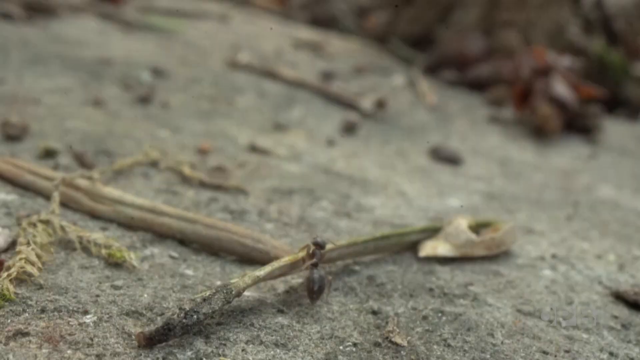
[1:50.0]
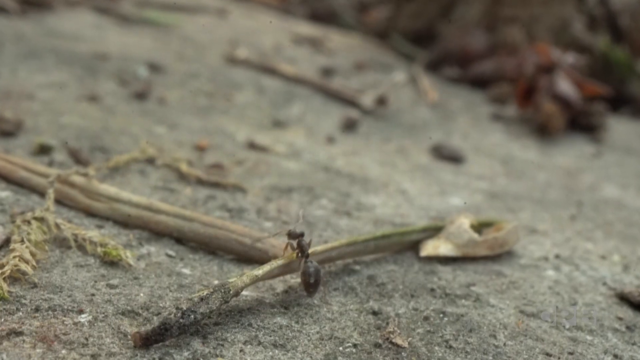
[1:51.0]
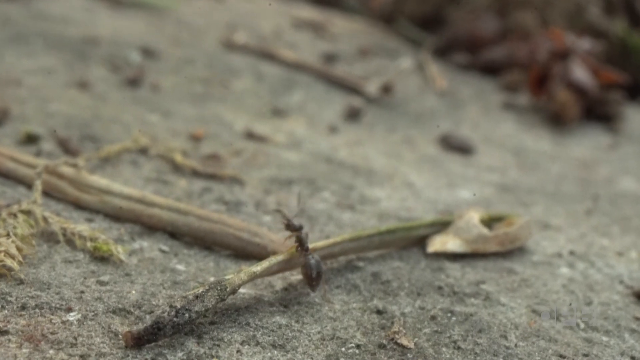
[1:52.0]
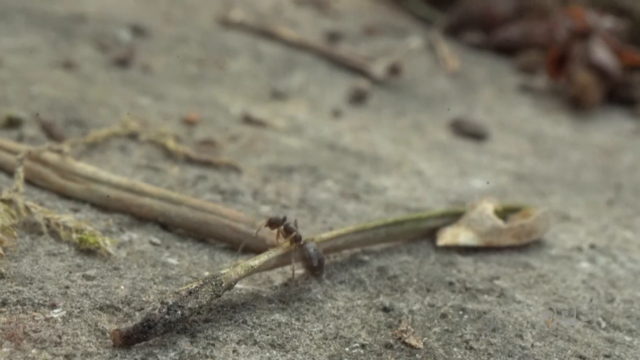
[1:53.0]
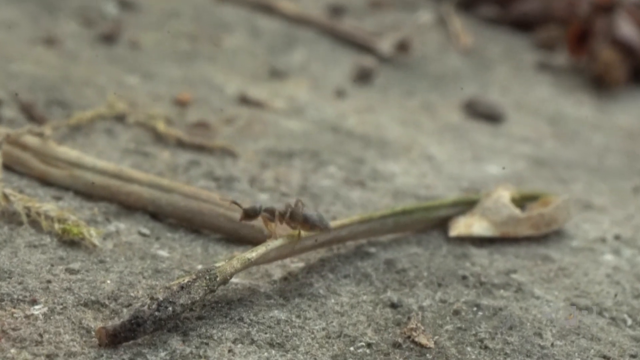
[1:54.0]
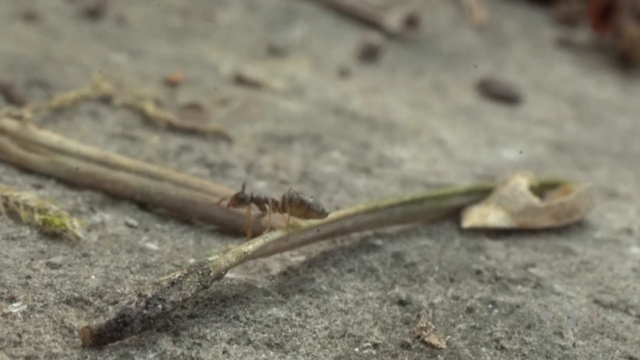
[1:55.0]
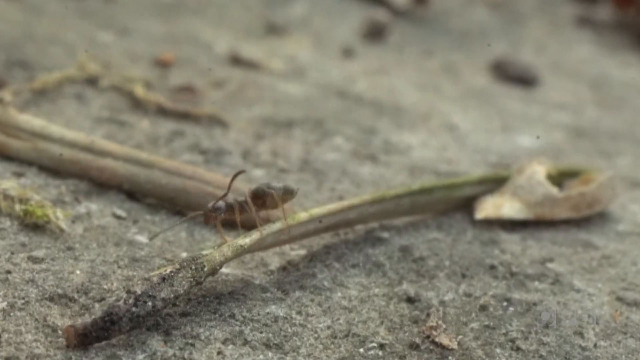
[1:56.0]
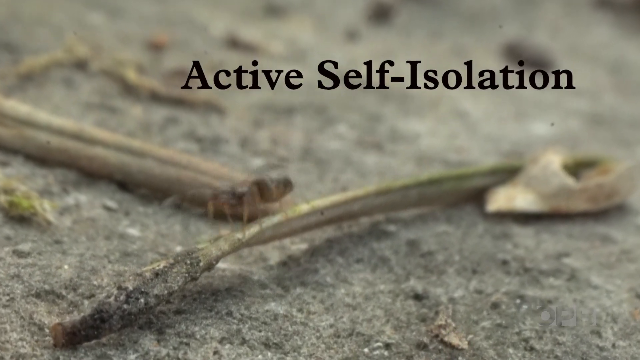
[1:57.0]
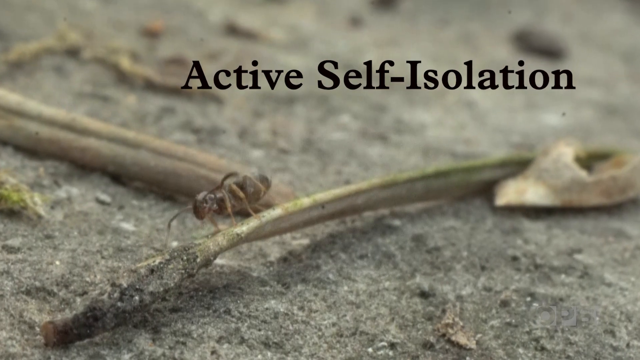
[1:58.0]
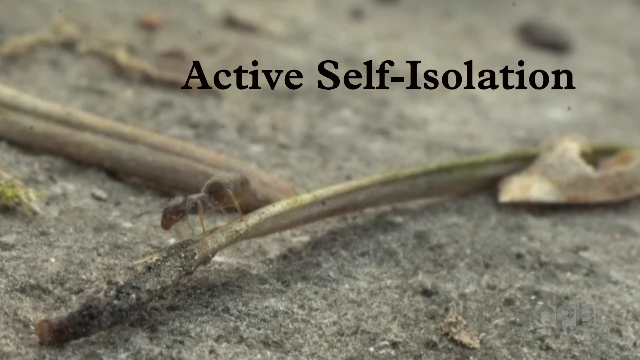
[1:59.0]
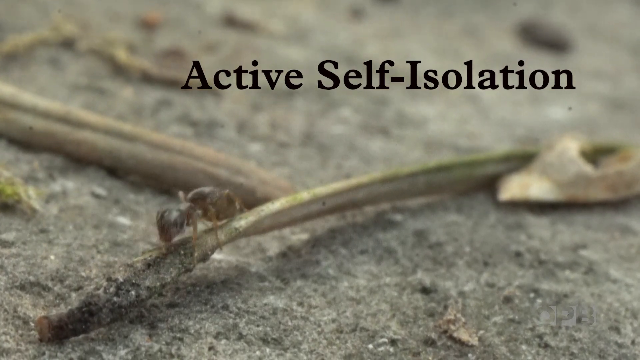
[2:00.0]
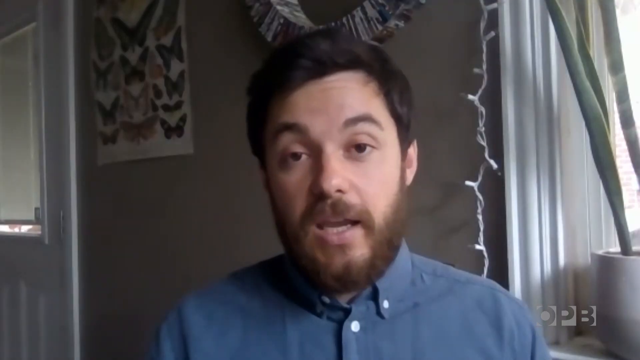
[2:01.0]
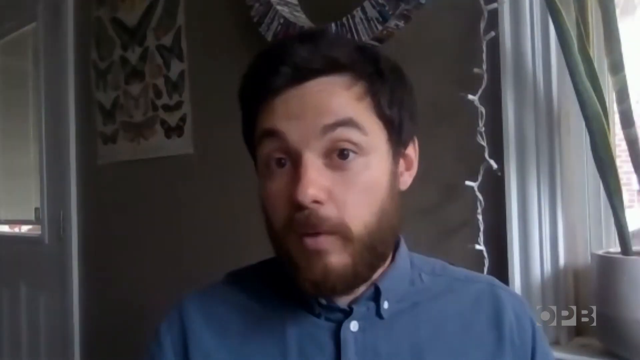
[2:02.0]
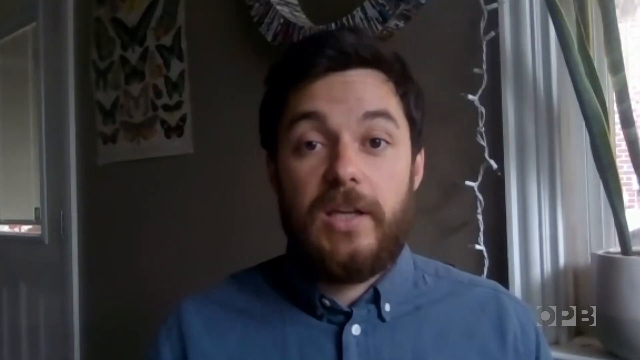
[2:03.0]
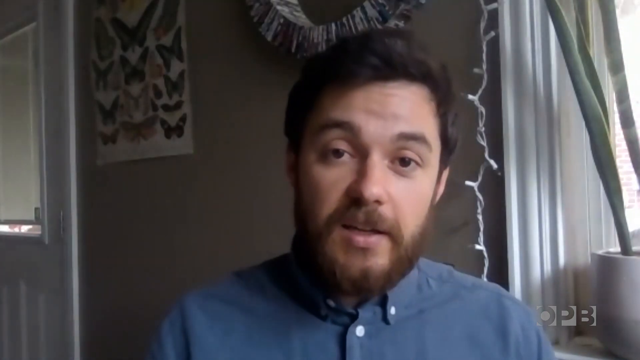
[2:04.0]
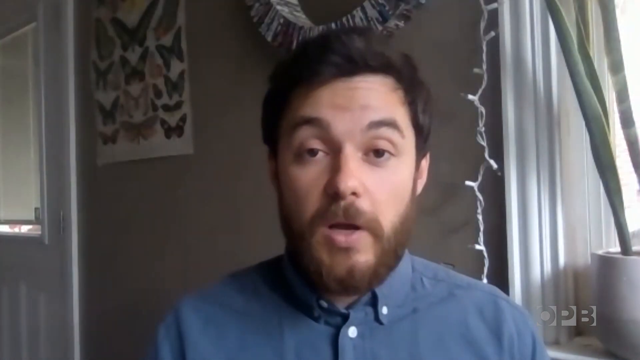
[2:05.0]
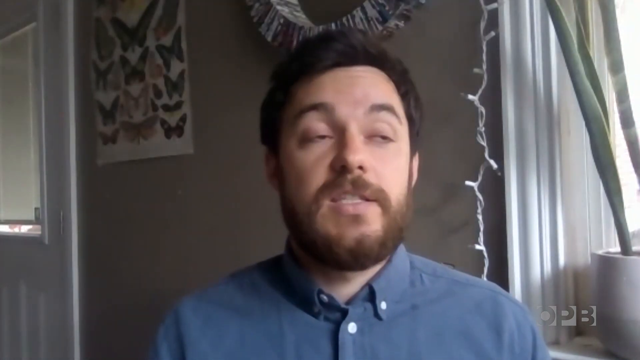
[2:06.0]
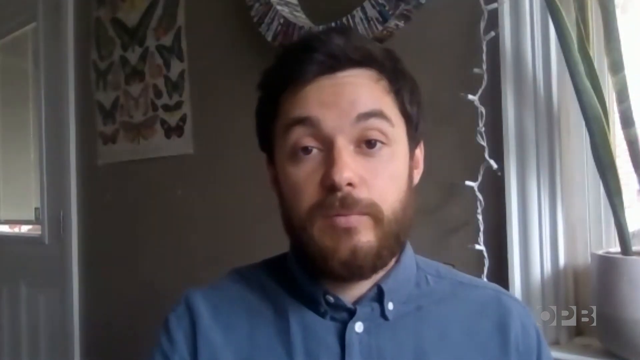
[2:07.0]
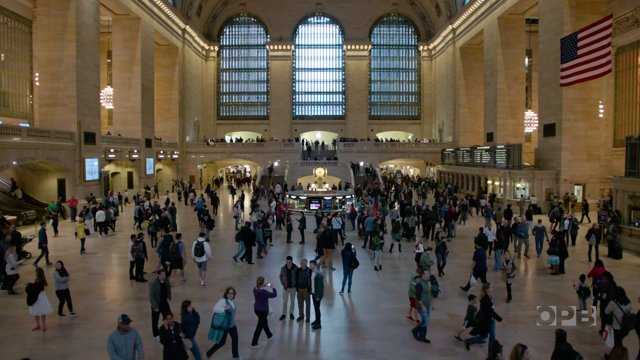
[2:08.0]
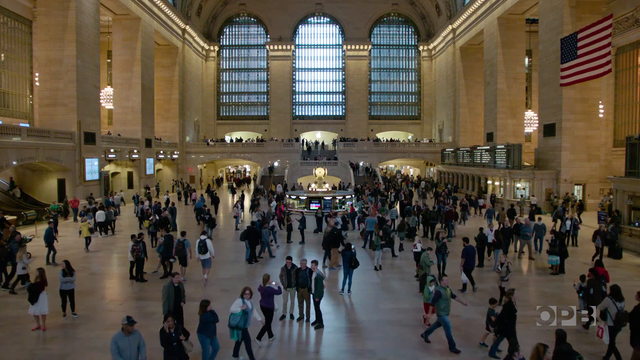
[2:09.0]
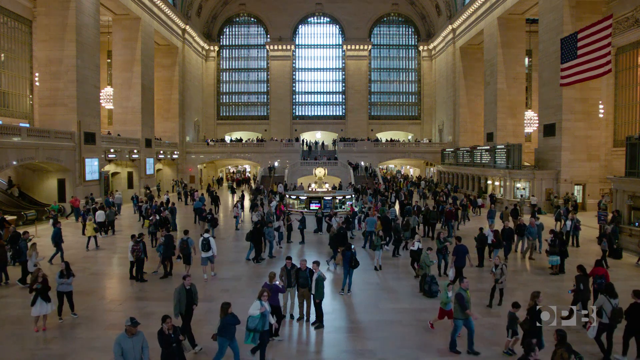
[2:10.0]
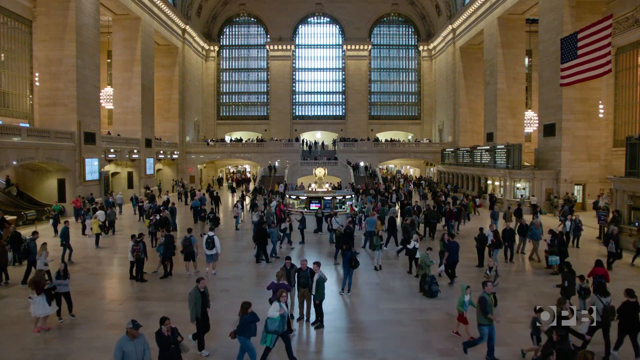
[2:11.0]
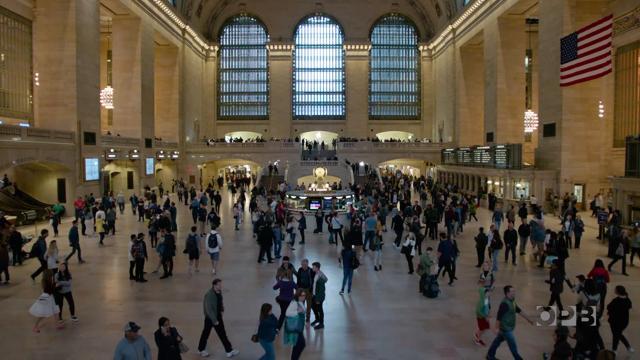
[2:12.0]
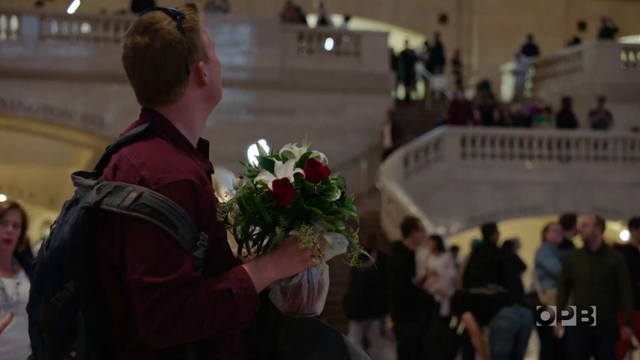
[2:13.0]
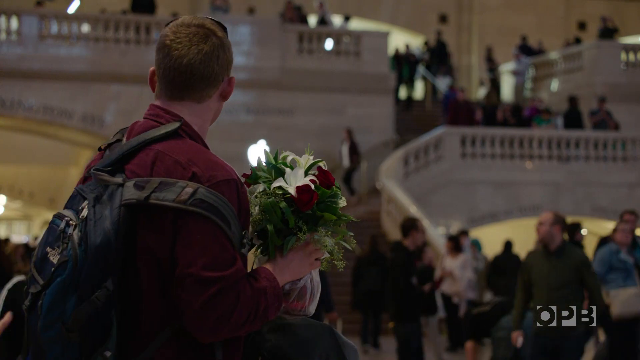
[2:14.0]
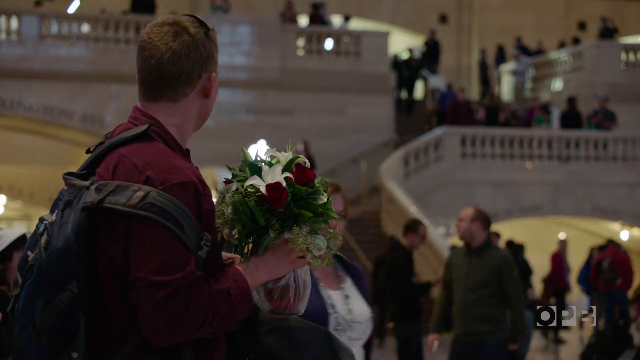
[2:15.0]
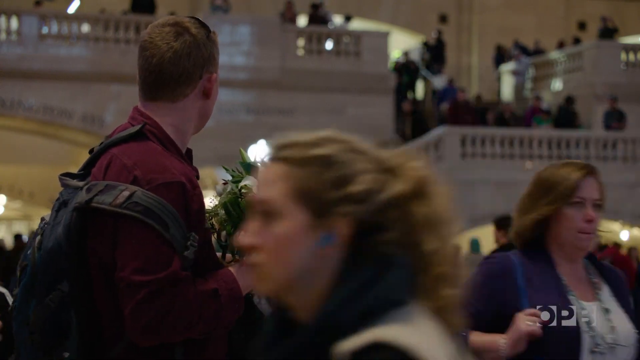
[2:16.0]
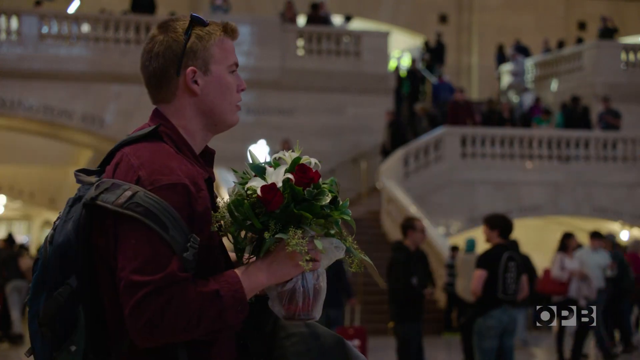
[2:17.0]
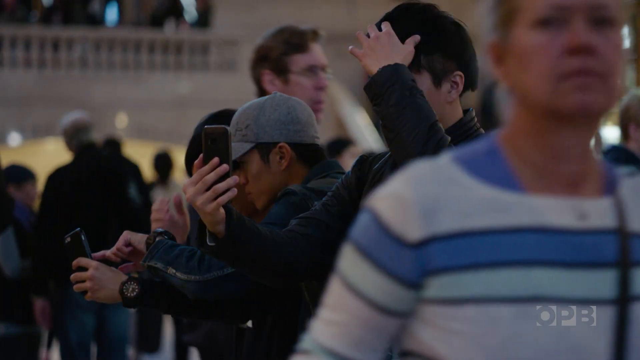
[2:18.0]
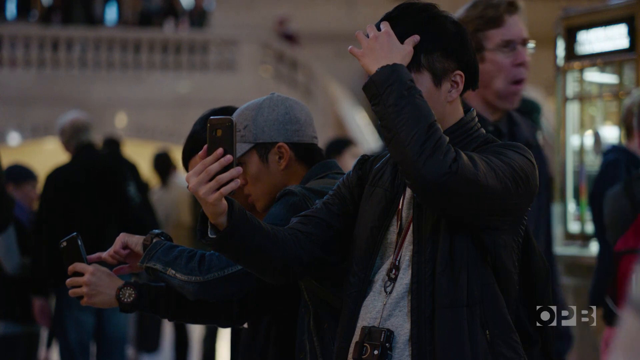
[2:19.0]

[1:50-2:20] An ant-type bug with antennae tries to climb over a stem, with the words "active self-isolation" on screen, and after getting over it walks on the stem. The professor from the University of Texas appears again, in what is probably his home. Then a very large hall is shown where people walk around with no masks on; some take selfies, and a man holds a vase of flowers. The hall is perhaps an airport, or maybe a train terminal.